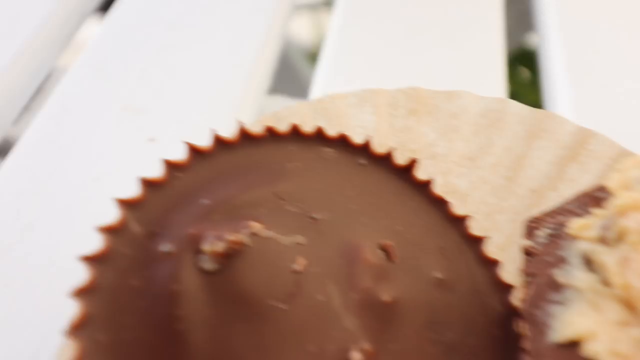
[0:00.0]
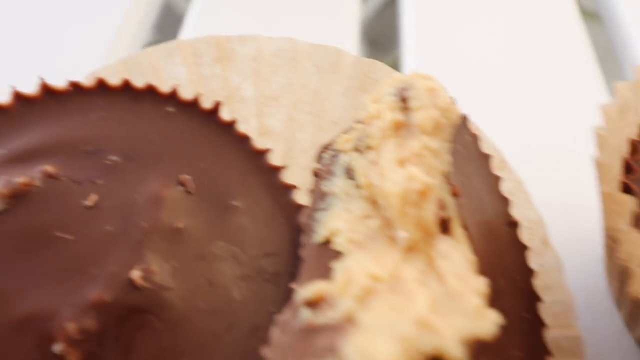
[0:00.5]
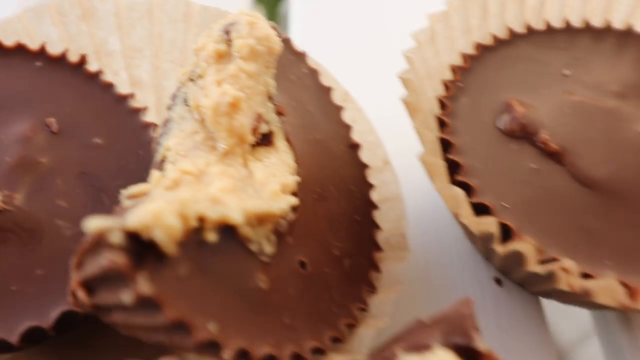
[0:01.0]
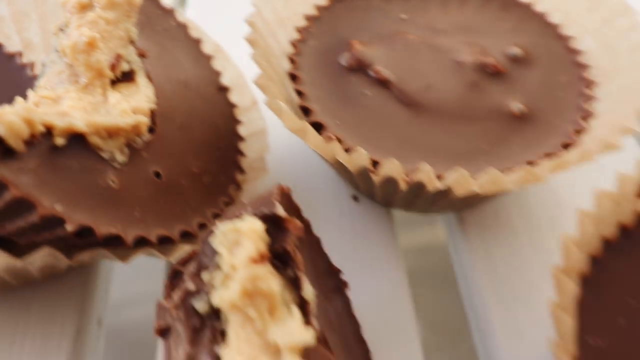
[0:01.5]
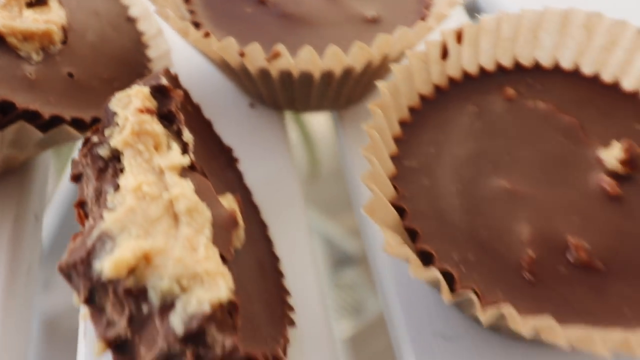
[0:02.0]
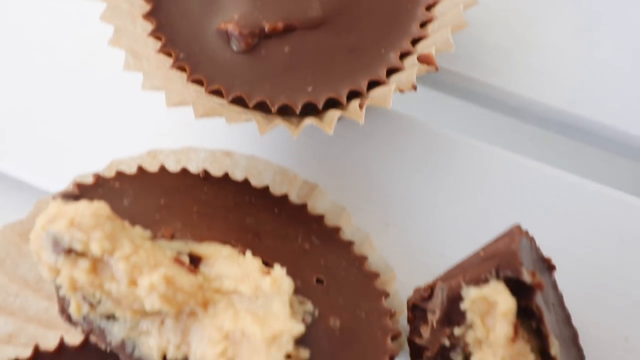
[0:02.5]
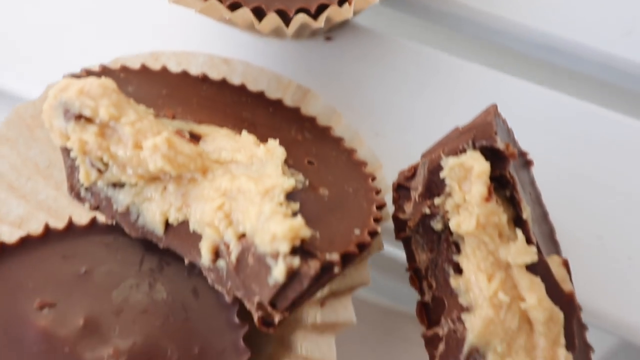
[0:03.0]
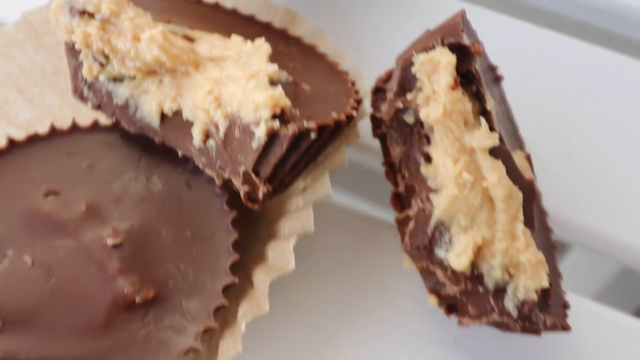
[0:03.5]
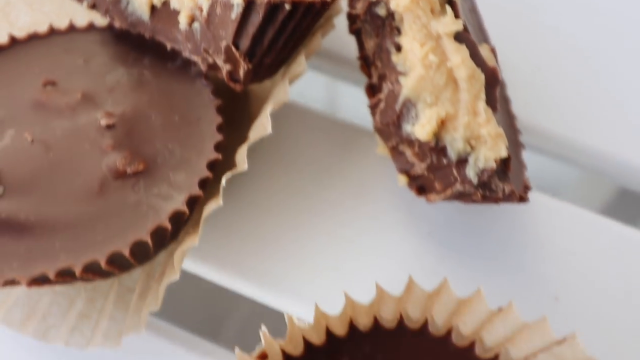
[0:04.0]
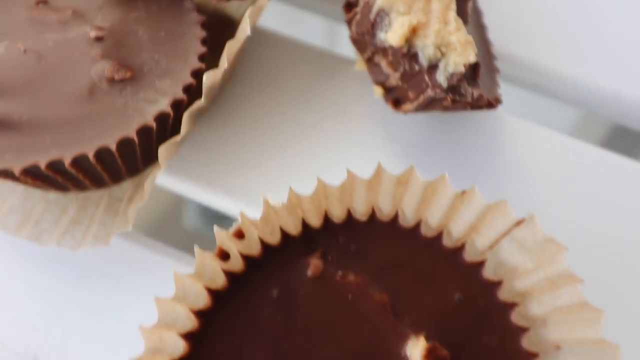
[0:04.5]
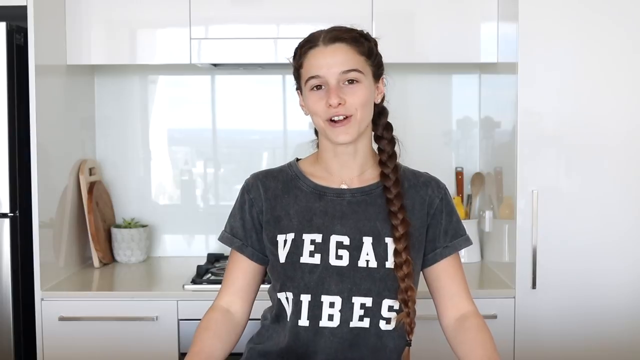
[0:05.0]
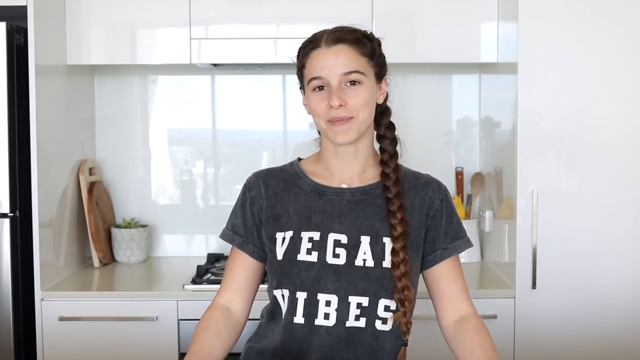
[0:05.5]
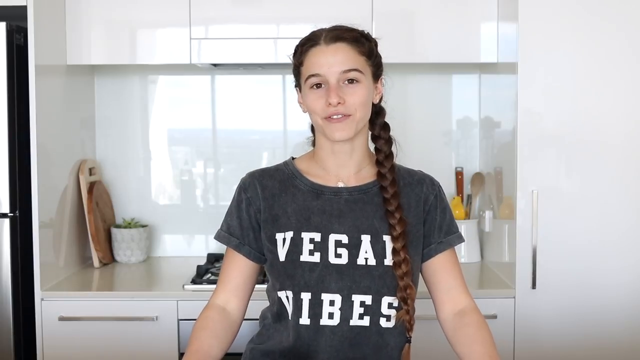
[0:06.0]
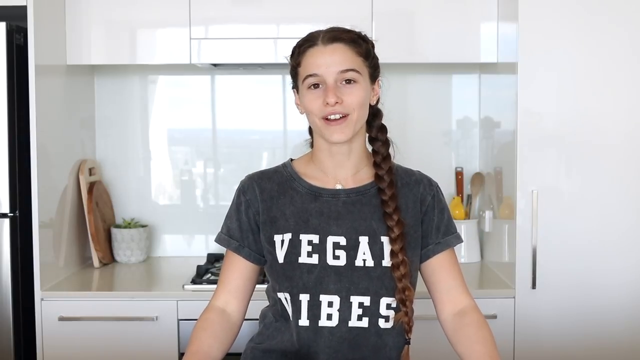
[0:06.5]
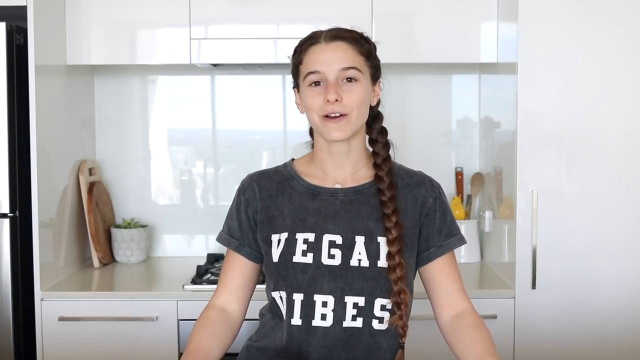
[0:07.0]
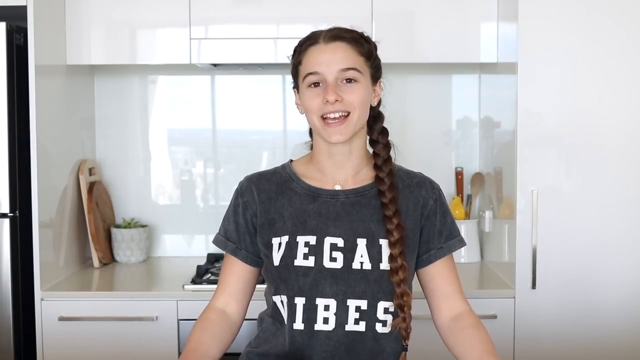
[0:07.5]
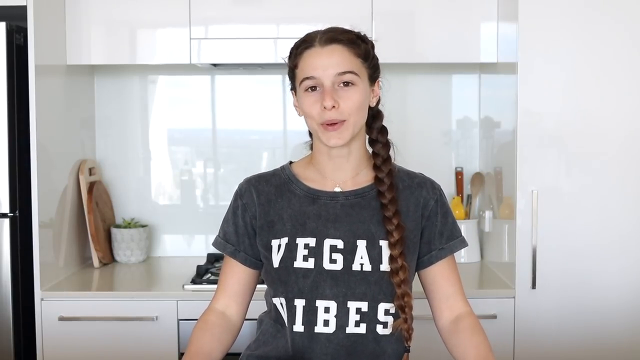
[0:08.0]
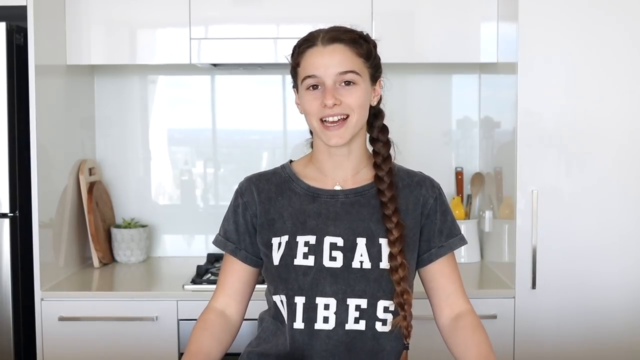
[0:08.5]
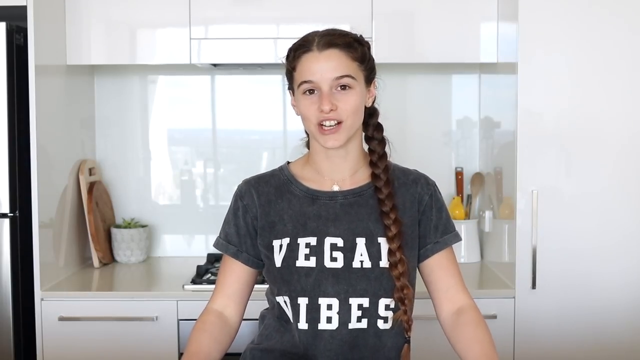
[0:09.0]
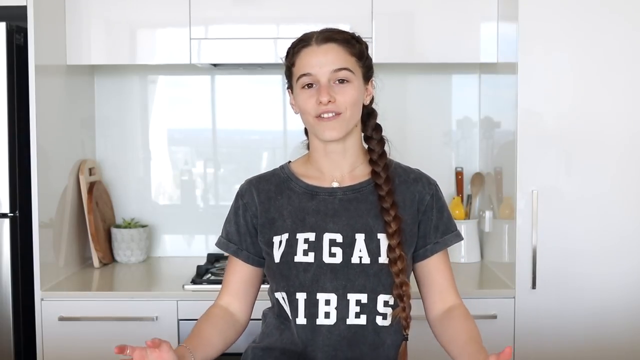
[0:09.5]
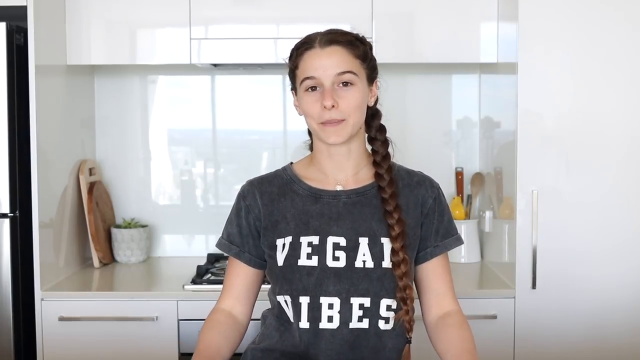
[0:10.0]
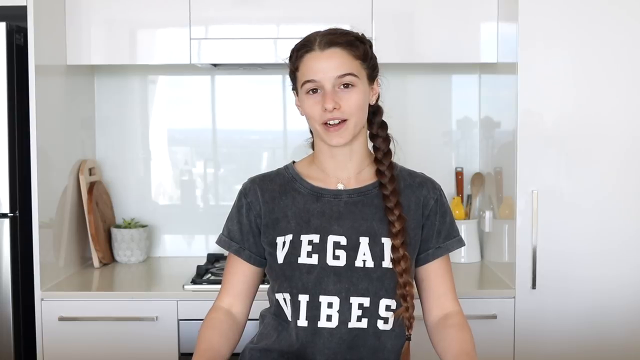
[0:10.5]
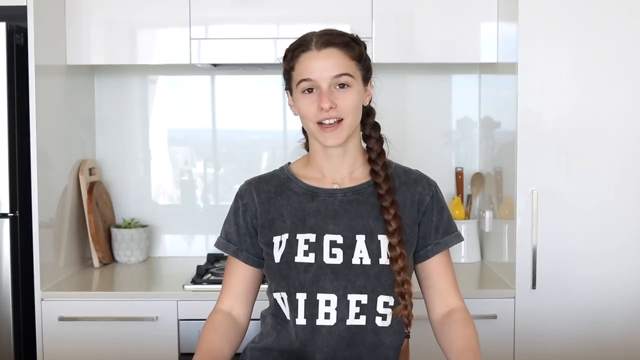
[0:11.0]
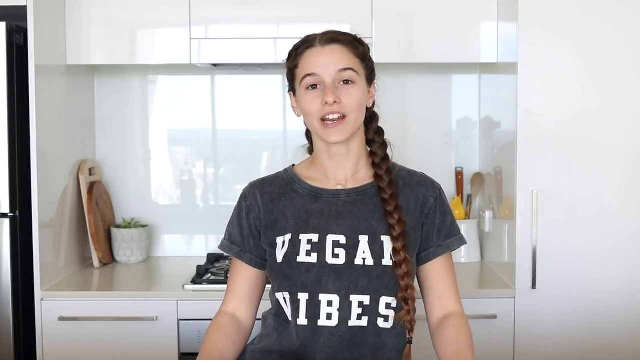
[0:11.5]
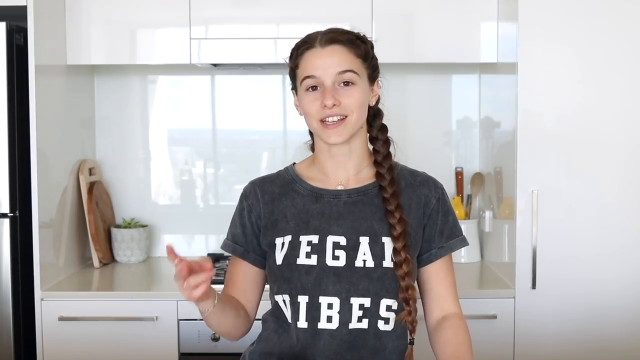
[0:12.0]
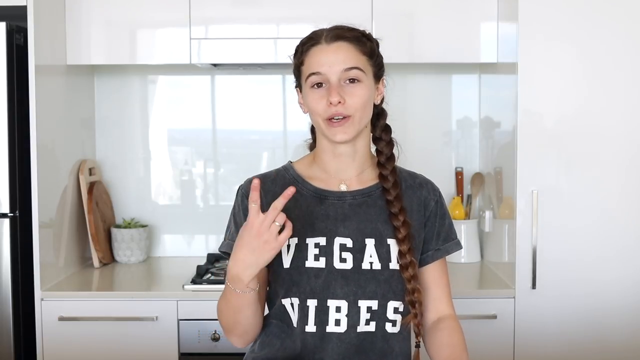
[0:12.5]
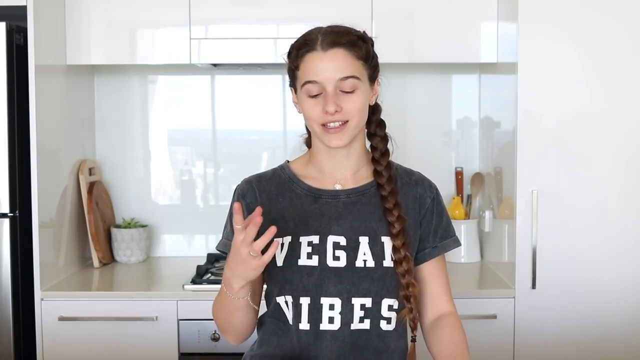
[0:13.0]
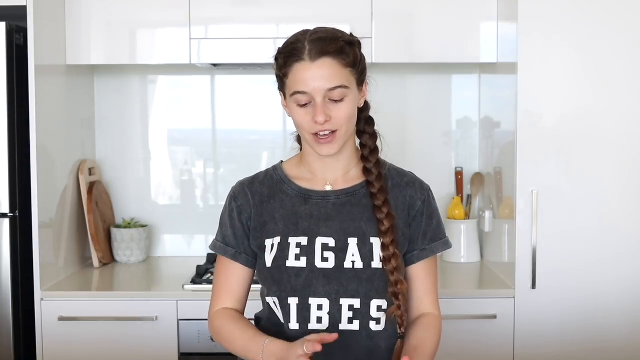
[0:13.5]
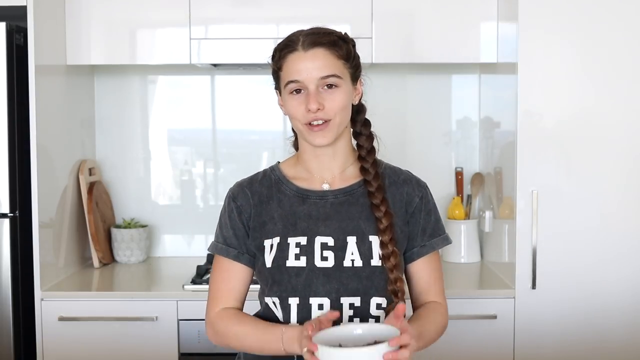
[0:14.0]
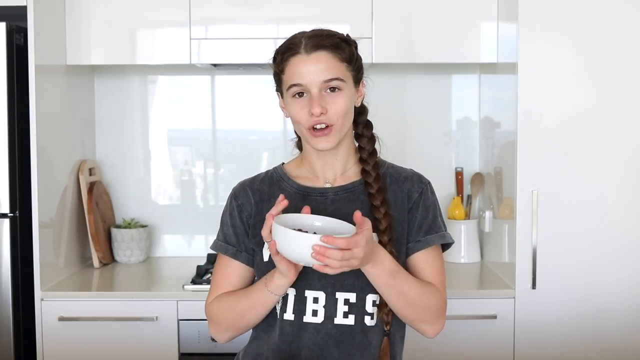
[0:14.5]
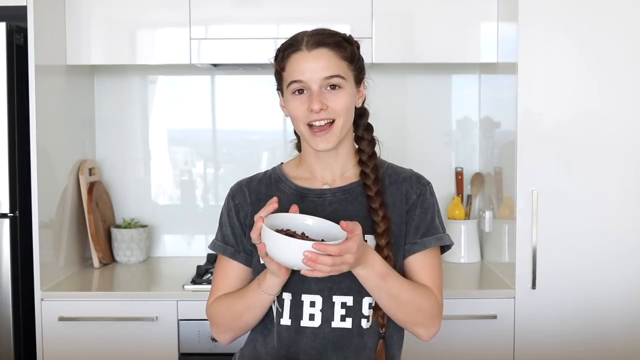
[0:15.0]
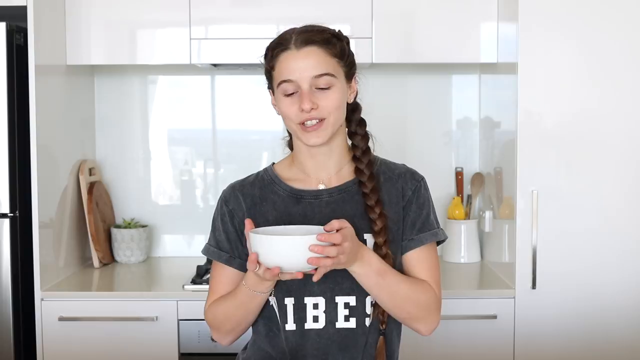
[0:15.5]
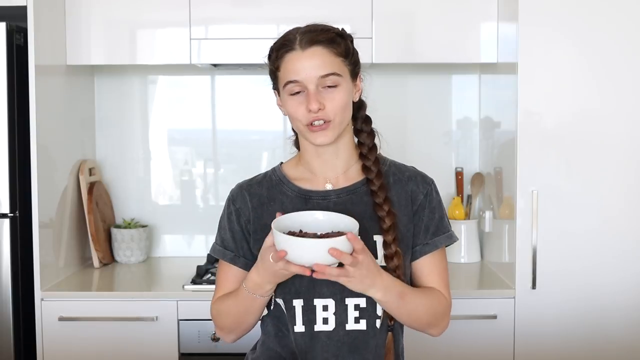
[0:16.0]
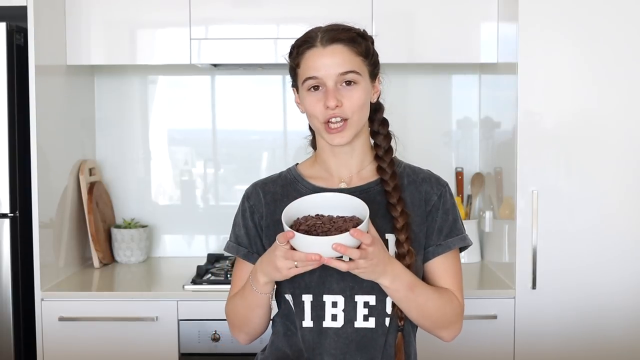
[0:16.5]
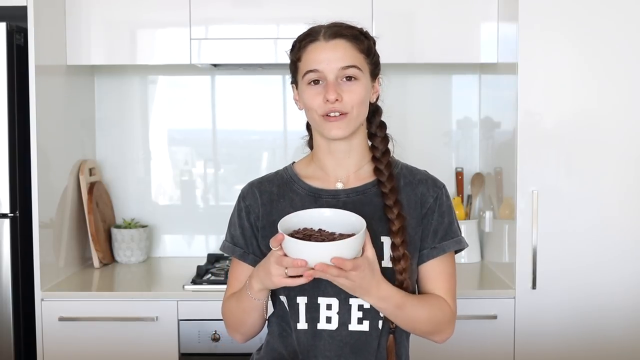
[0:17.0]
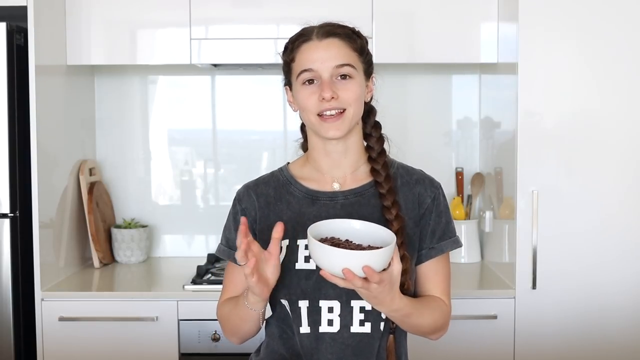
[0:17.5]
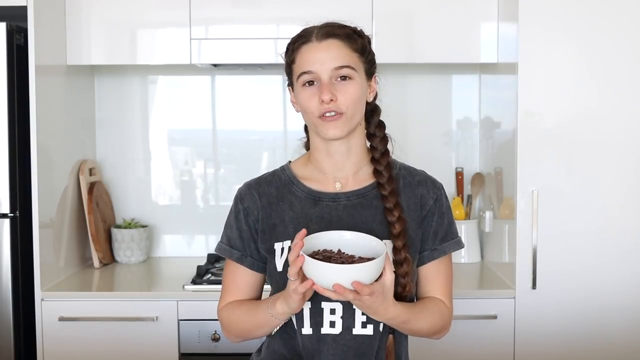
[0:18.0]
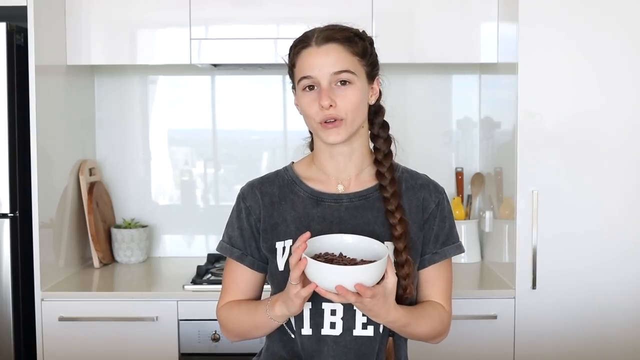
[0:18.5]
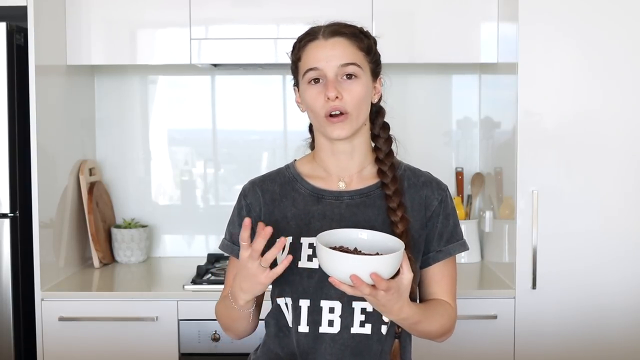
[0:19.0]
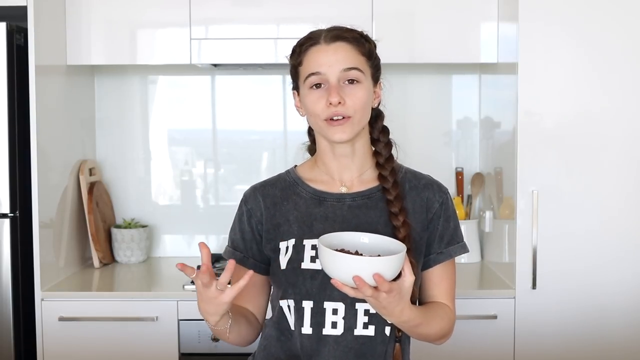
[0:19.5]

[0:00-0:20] Chocolate candy cups are being made. They are on a table inside cupcake containers, and they are dipped into a white substance; the camera pans over many of them on the table. Next, an older white teenager appears, with long black braided hair that reaches all the way to her stomach and is over her left shoulder in the front. She wears a gray t-shirt that says "Vegan Vibes" and has brown eyes. Behind her is an open window over a stove, and city buildings are visible, blurred, through a curtain in the back. She opens her mouth wide to emphasize her syllables as she speaks to the camera. She raises her right hand with two fingers up as she looks into a white bowl of chopped-up chocolate chips, which she displays for the camera. She moves her right hand back and forth as she speaks about the items she is making.